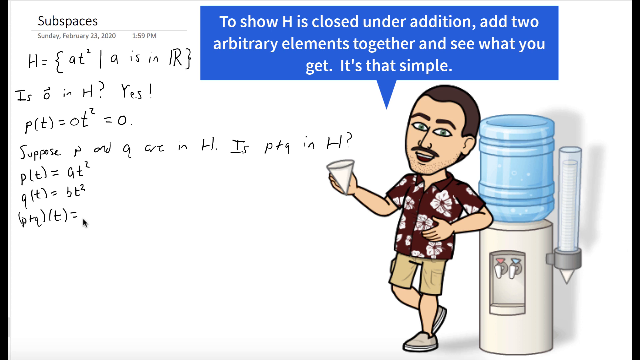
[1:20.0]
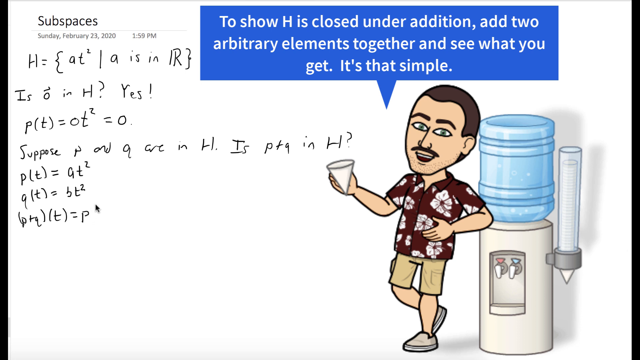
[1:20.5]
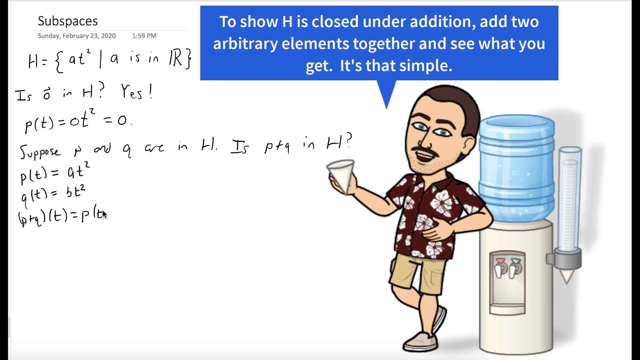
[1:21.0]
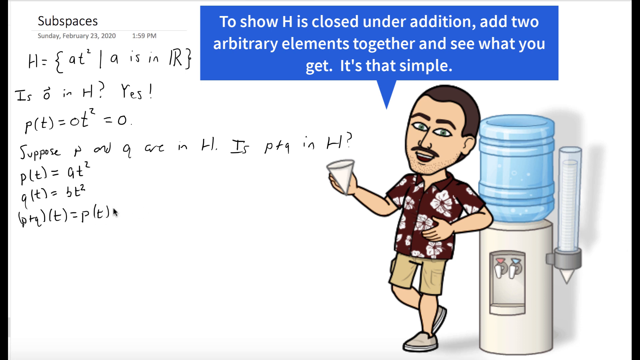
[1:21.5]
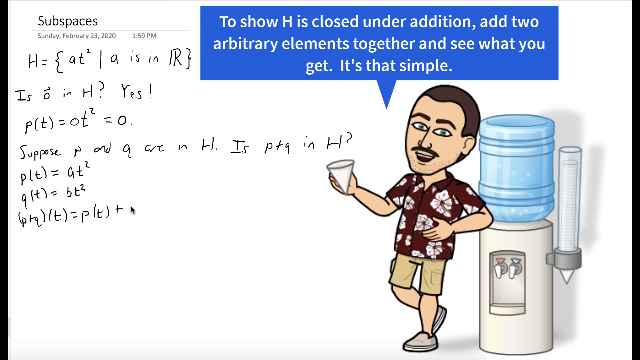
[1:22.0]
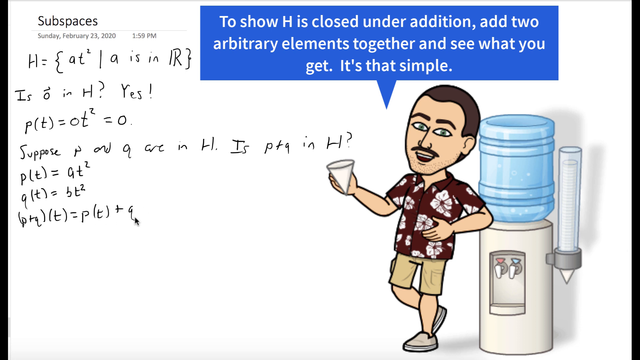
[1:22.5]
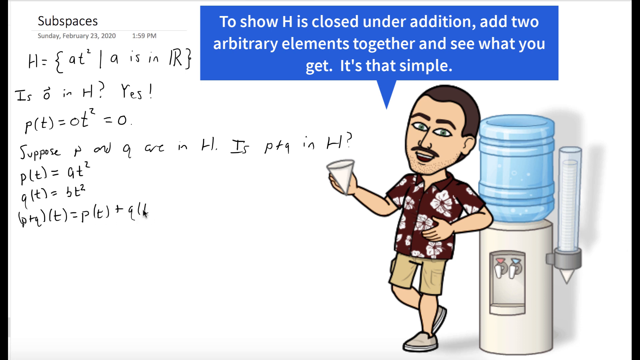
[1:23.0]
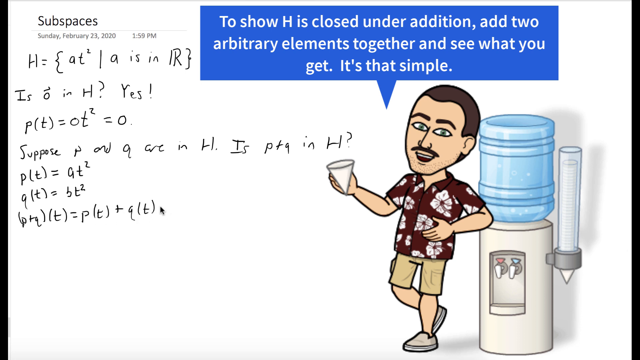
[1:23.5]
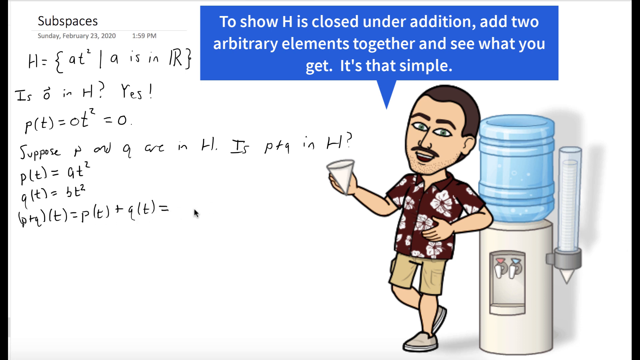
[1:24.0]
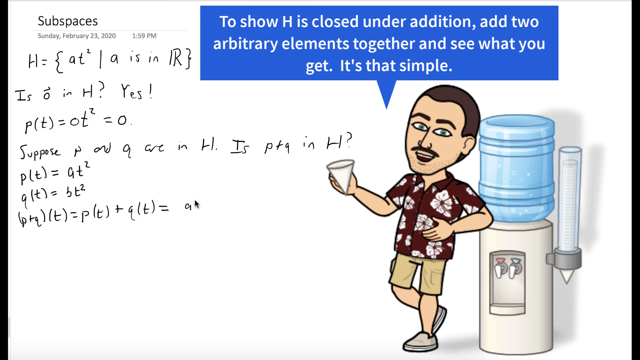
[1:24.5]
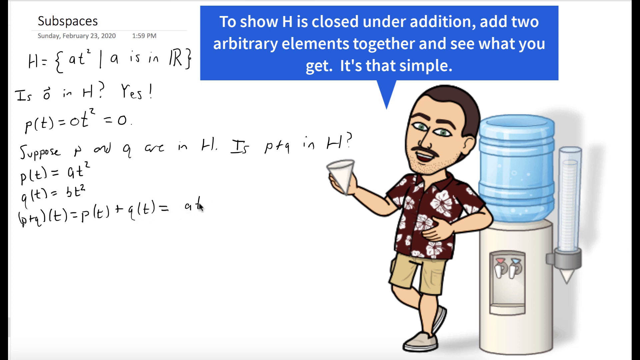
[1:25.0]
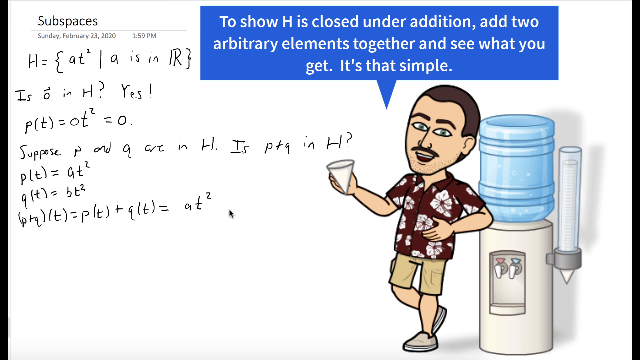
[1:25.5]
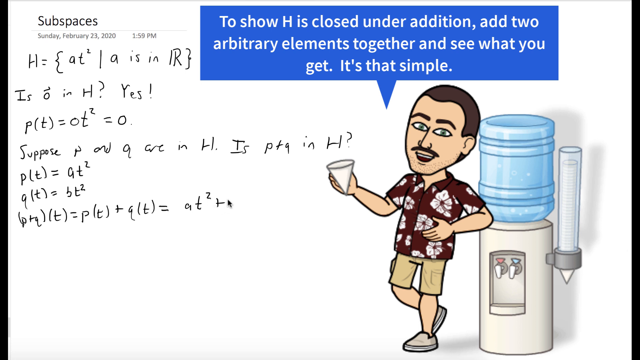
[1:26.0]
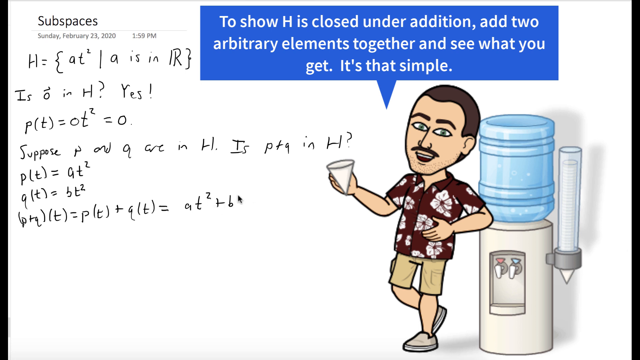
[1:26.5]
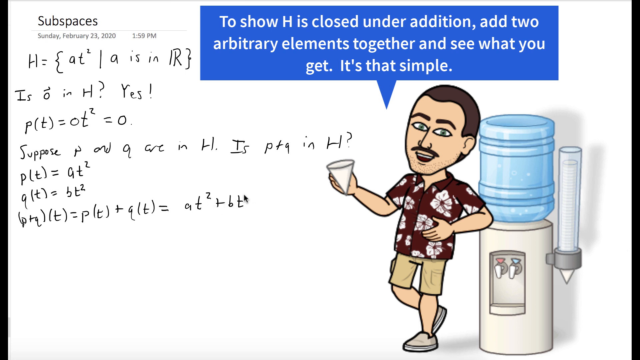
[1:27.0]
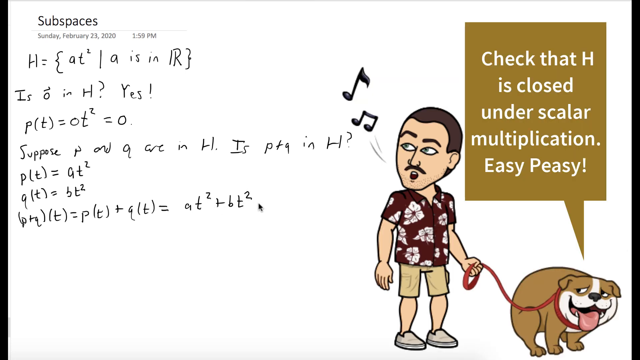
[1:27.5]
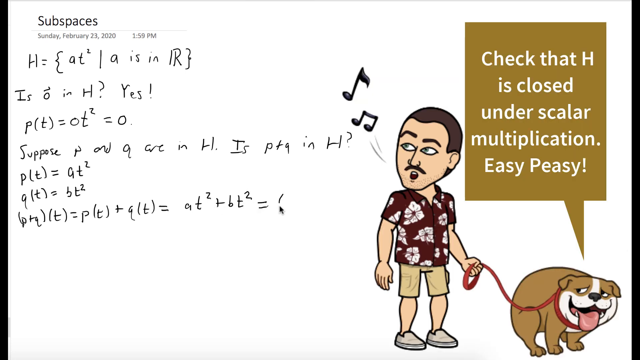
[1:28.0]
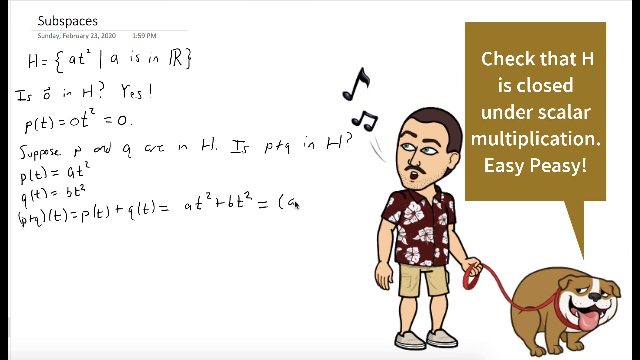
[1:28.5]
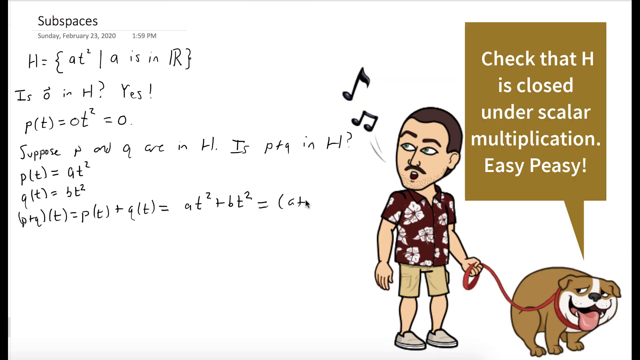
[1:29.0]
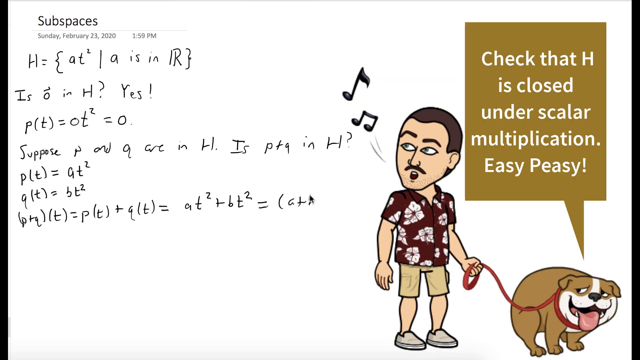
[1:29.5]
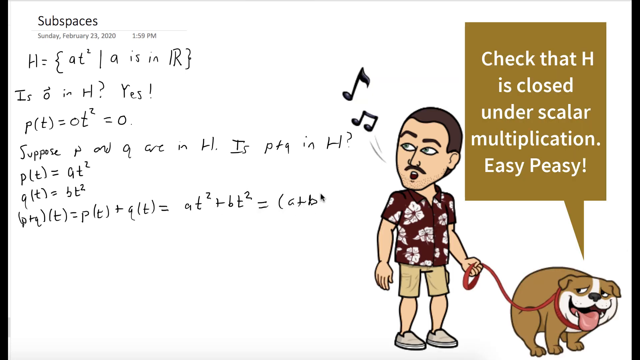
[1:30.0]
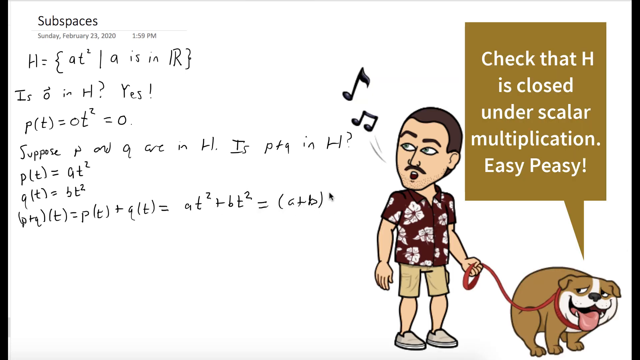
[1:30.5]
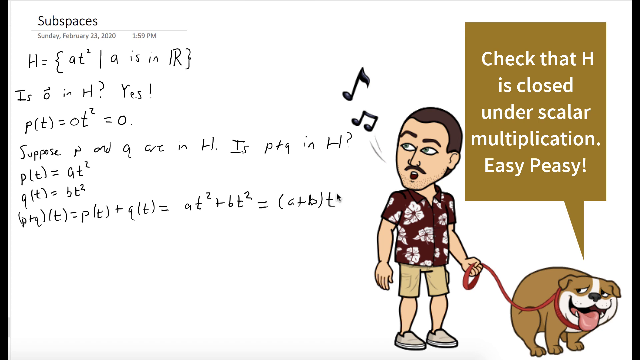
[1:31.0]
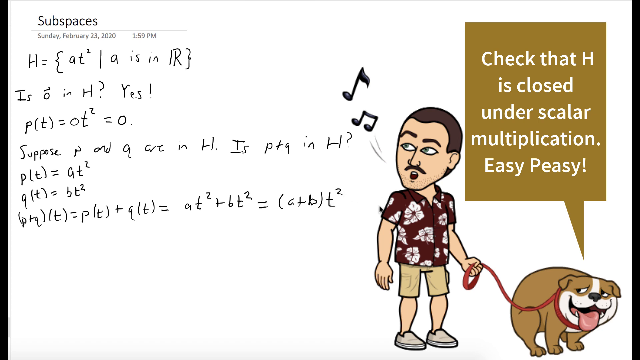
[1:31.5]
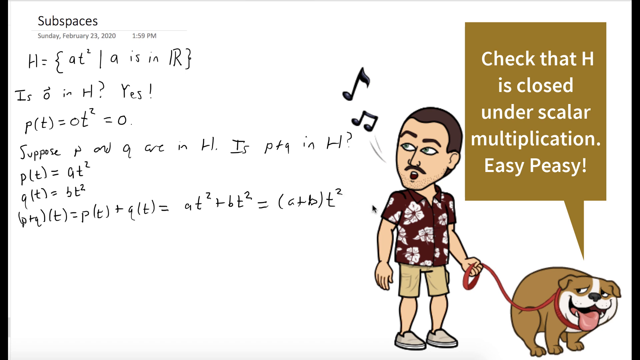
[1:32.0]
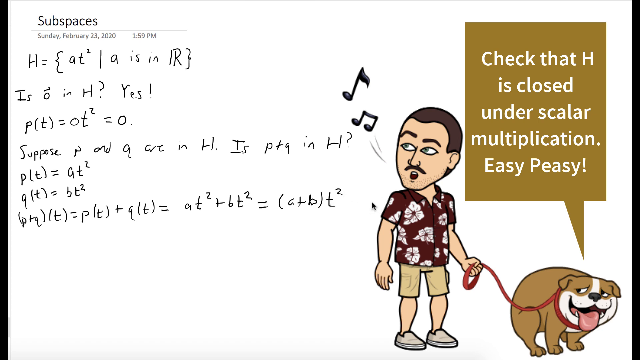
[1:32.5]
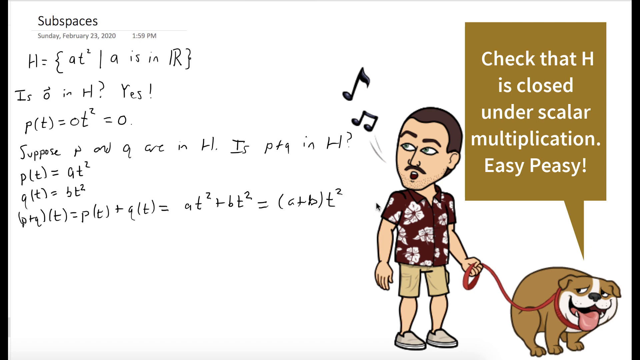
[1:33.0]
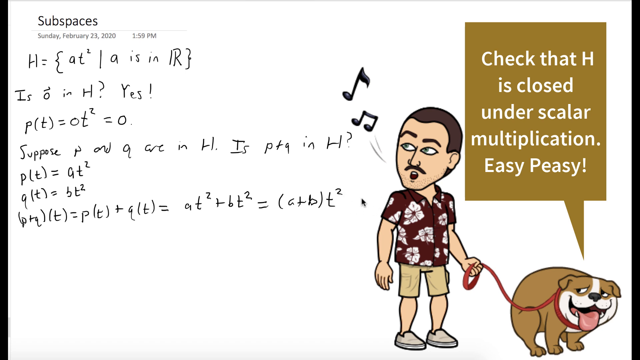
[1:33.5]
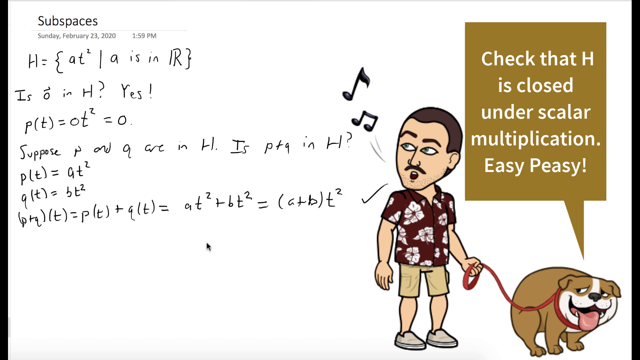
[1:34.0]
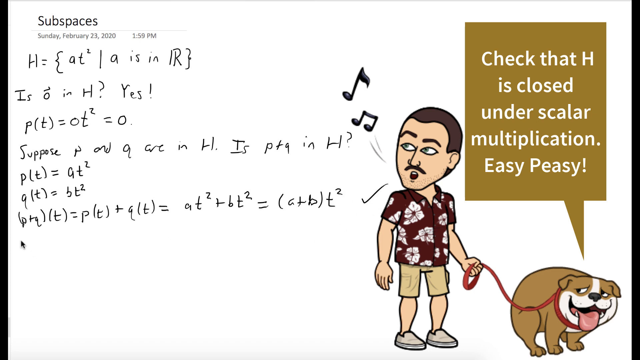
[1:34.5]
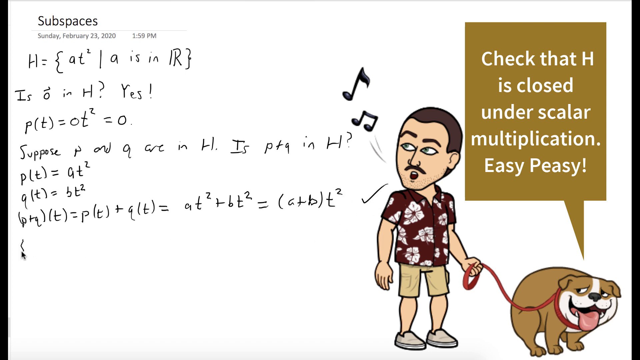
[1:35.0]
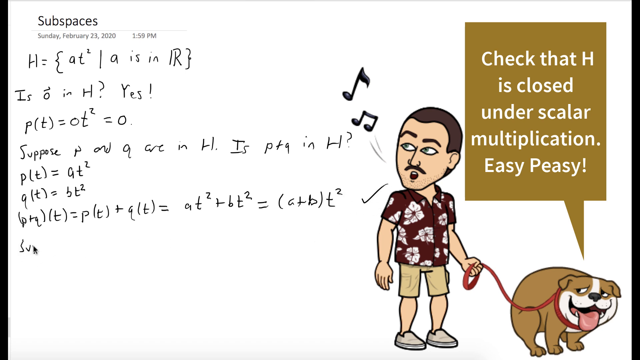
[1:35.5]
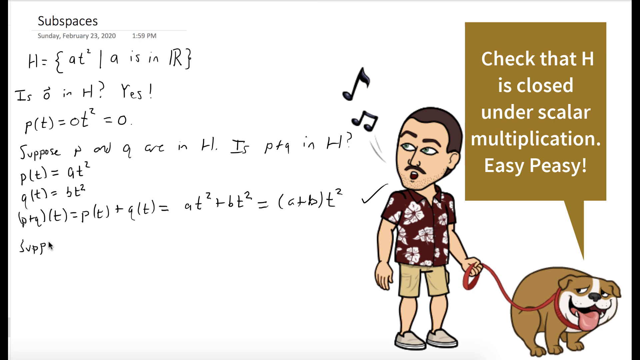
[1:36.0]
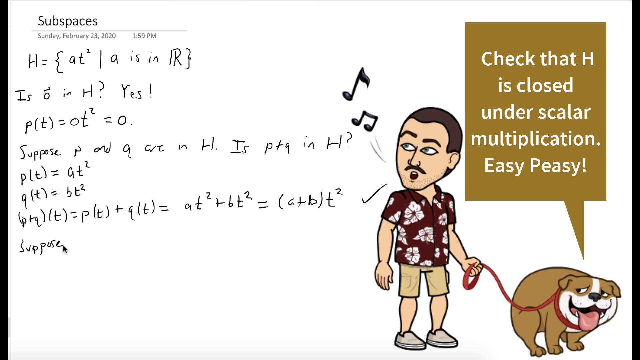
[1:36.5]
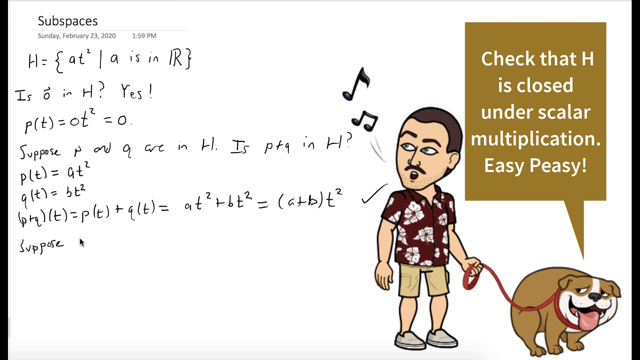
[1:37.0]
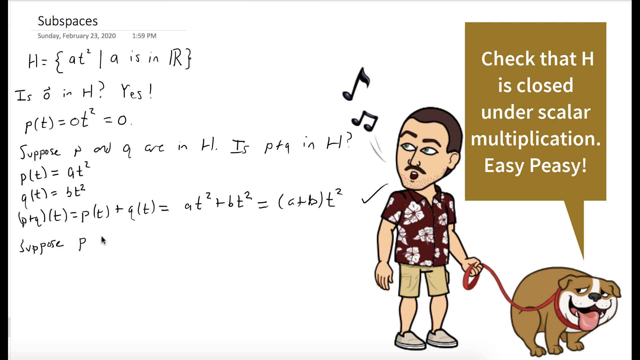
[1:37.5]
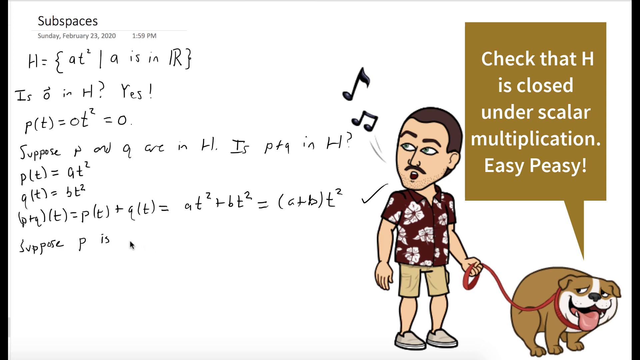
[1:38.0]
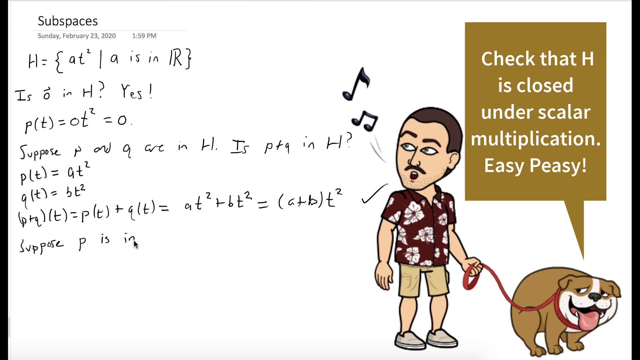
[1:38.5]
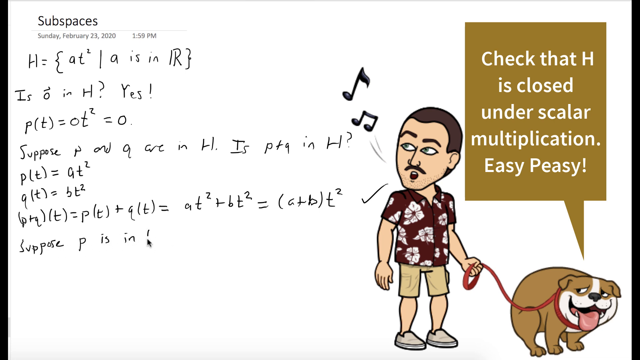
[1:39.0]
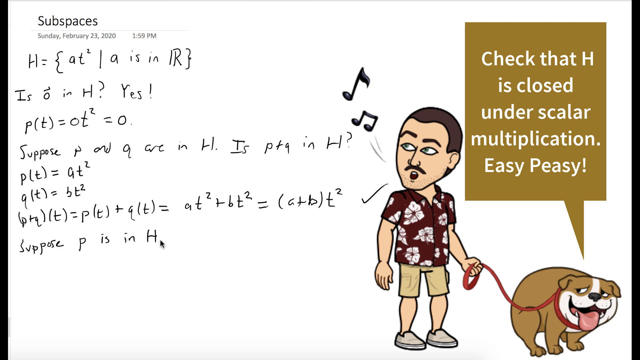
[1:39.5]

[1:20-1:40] The man in the burgundy Hawaiian shirt holds the paper cup as an equation is finished. The image then switches: the man in the burgundy shirt is no longer next to the water dispenser and appears to be singing a tune while walking a bulldog. The bulldog is brown with a white center of its face and is on a red leash. Above the bulldog, a brown chat bubble reads "Check that H is closed under scalar multiplication. Easy peasy." Music notes come out of the man's mouth, indicating that he is humming a tune. The cursor draws a check mark next to the last equation and then writes more of the work on the left, in the white writing space.